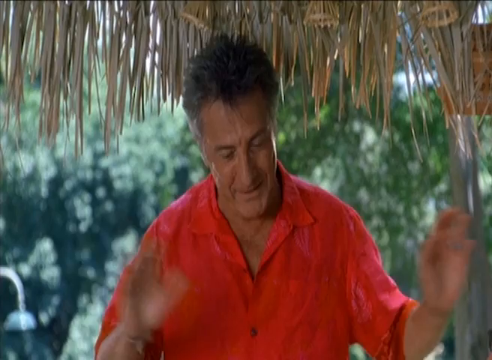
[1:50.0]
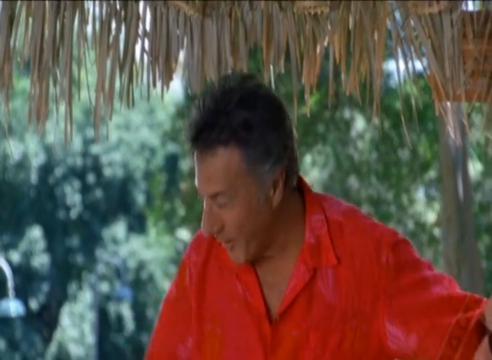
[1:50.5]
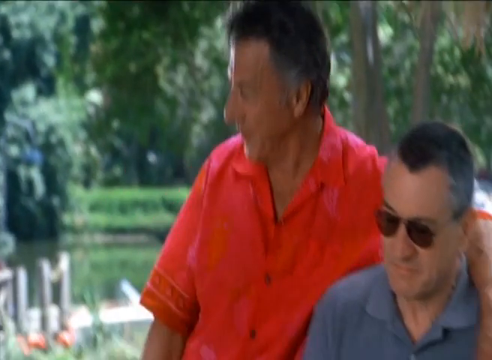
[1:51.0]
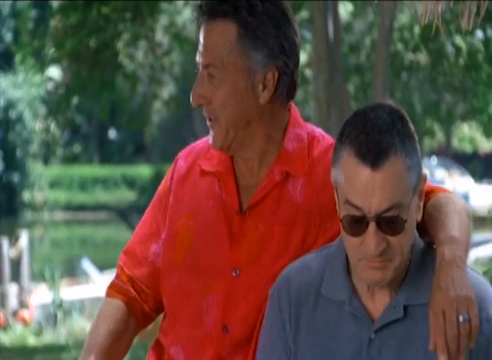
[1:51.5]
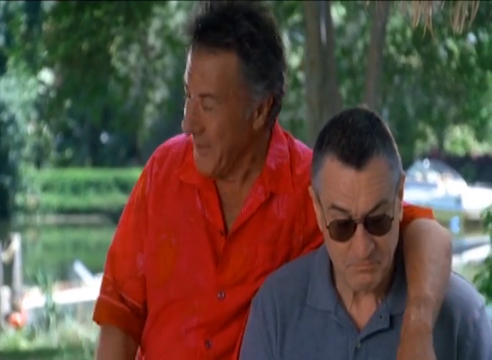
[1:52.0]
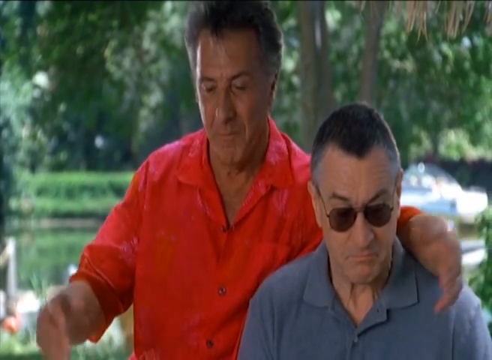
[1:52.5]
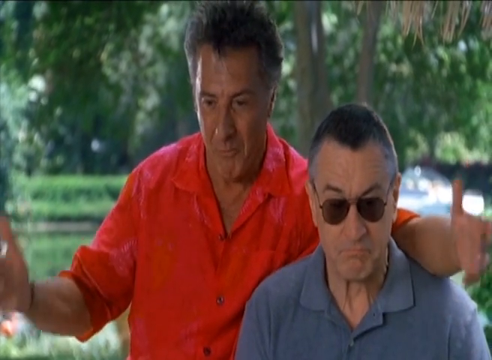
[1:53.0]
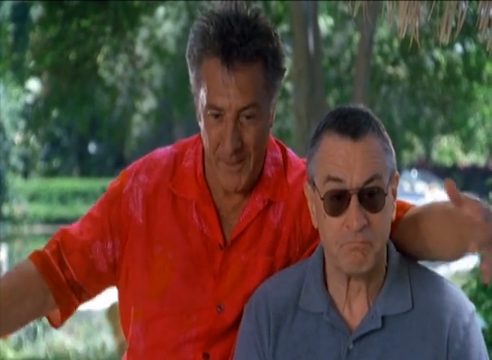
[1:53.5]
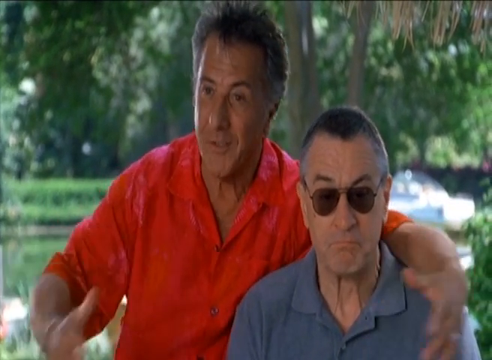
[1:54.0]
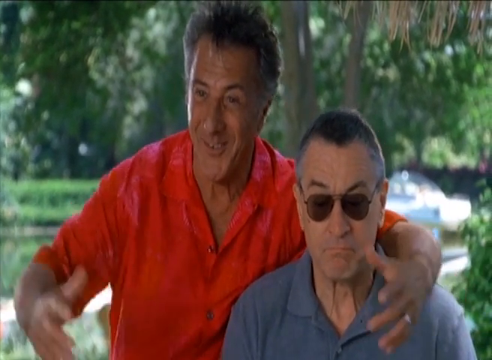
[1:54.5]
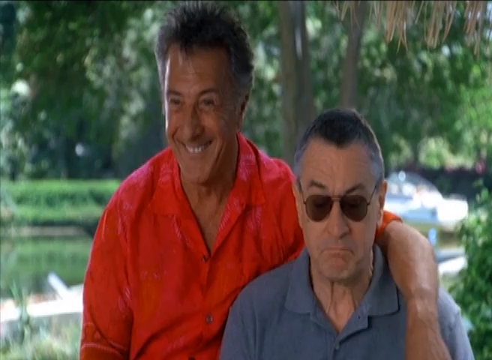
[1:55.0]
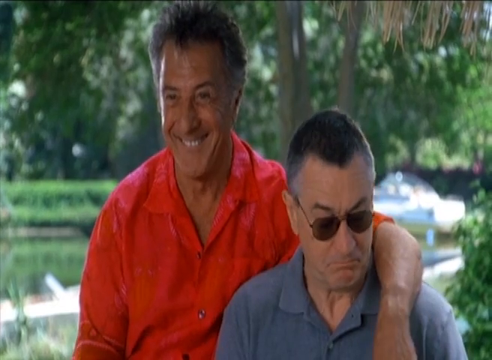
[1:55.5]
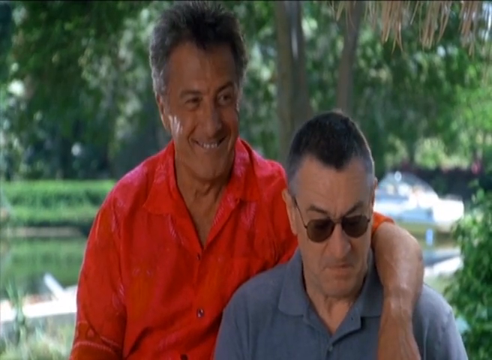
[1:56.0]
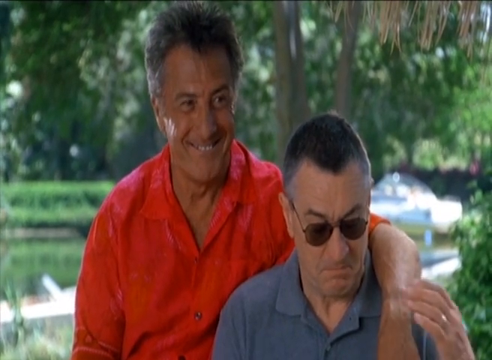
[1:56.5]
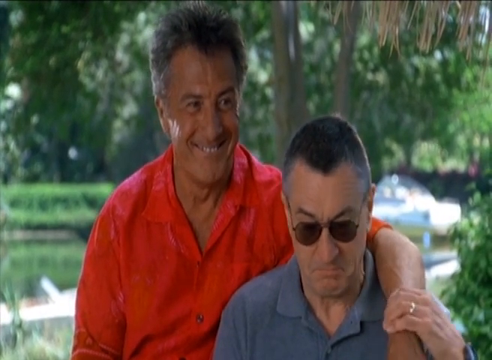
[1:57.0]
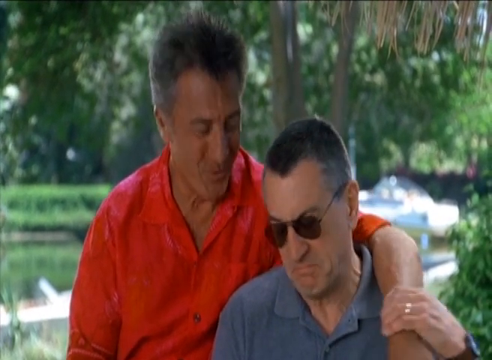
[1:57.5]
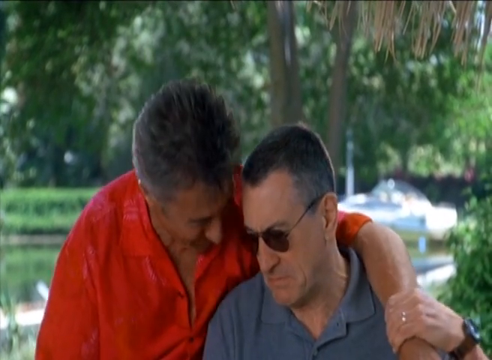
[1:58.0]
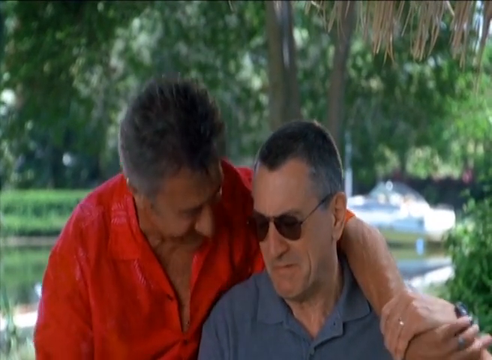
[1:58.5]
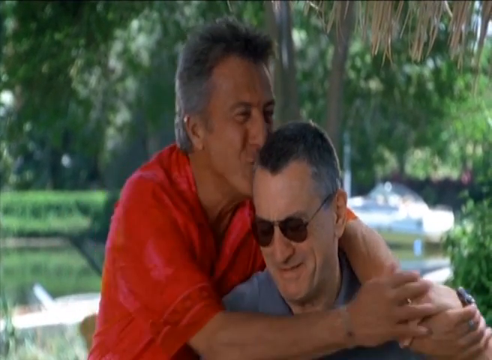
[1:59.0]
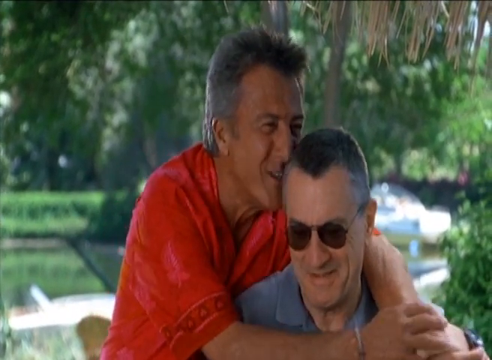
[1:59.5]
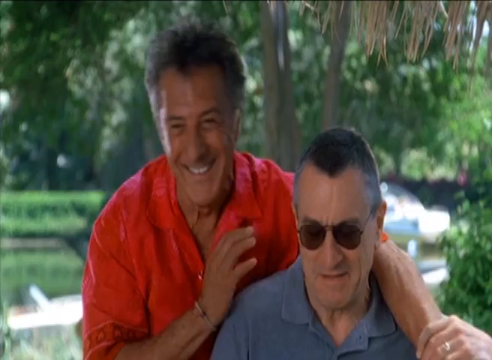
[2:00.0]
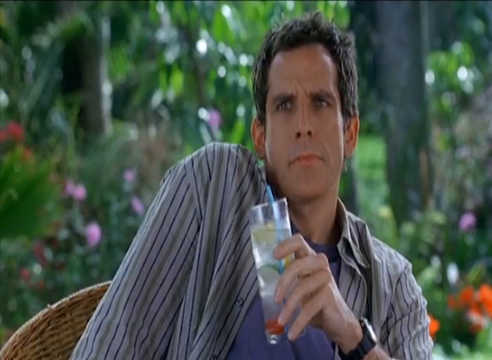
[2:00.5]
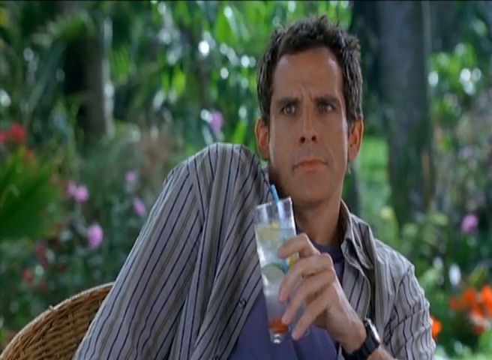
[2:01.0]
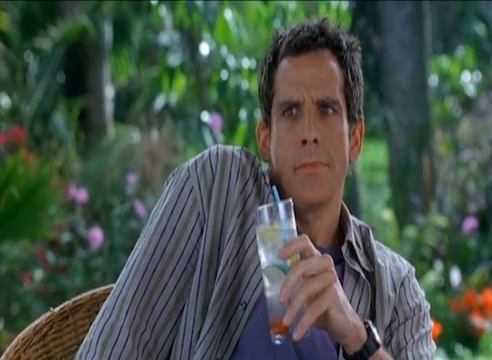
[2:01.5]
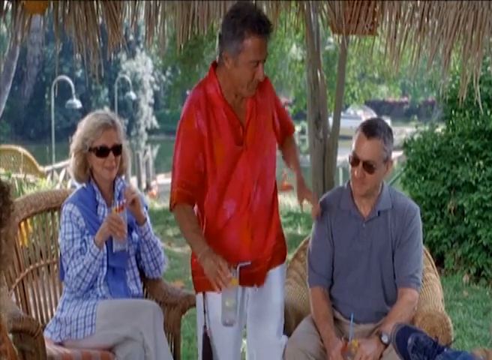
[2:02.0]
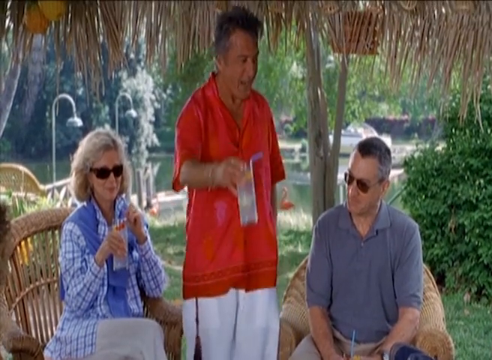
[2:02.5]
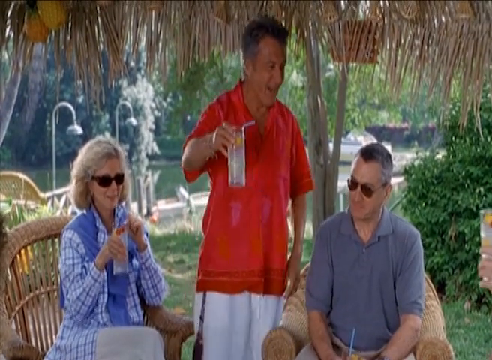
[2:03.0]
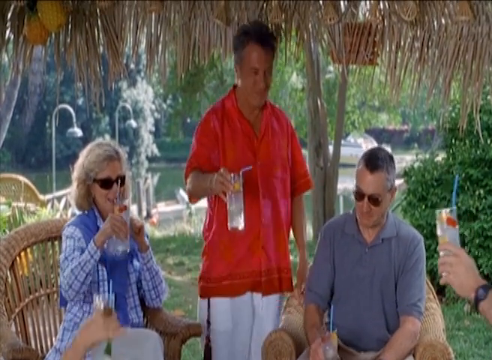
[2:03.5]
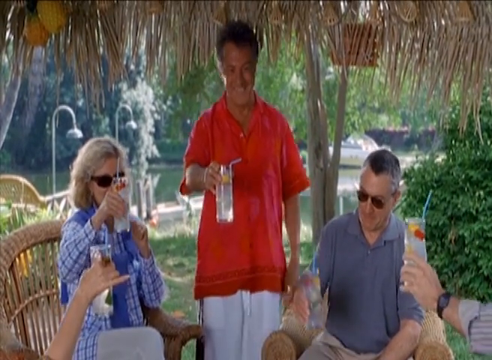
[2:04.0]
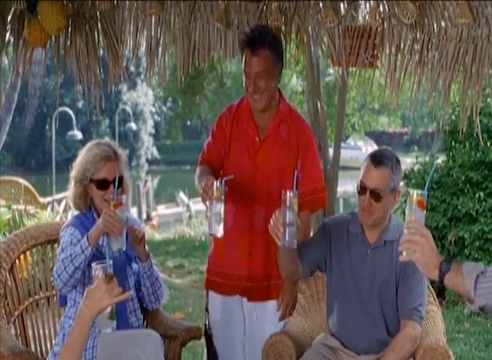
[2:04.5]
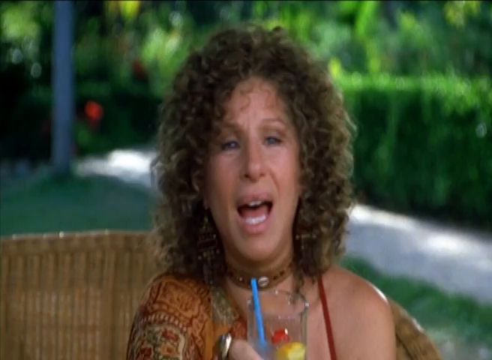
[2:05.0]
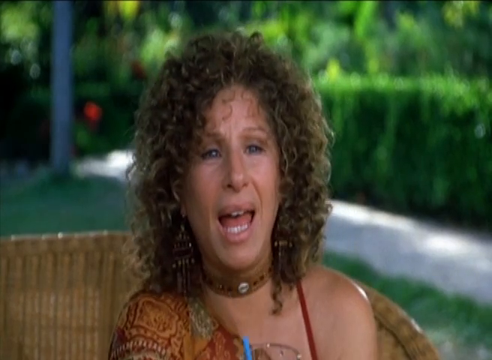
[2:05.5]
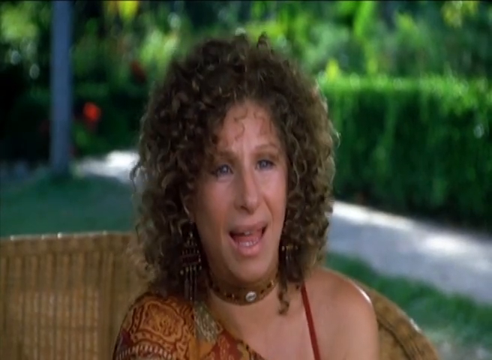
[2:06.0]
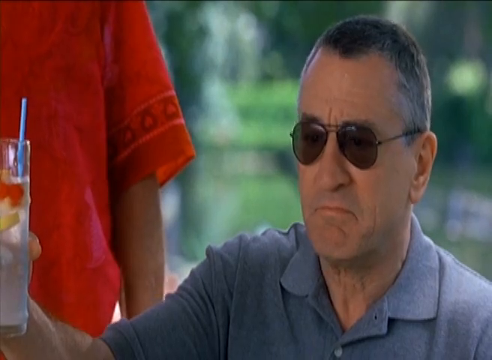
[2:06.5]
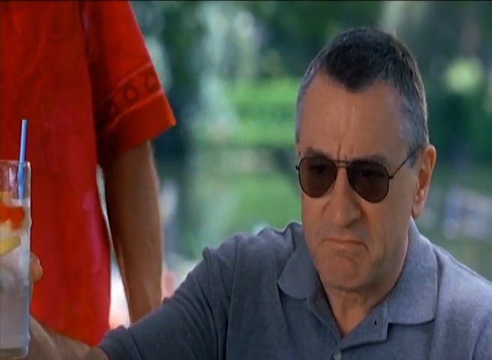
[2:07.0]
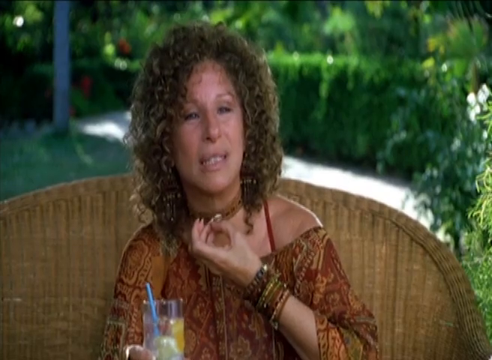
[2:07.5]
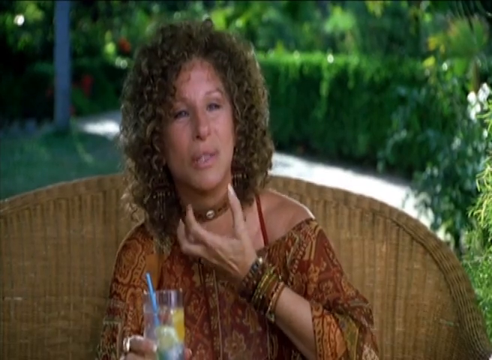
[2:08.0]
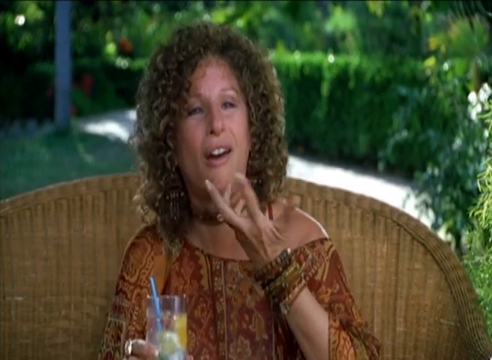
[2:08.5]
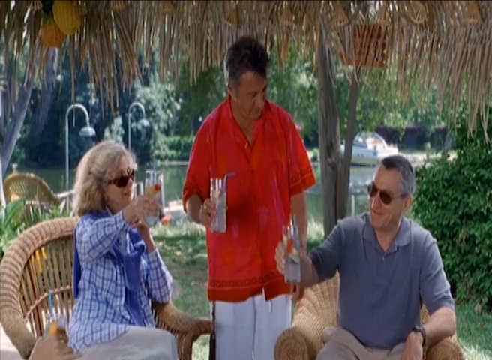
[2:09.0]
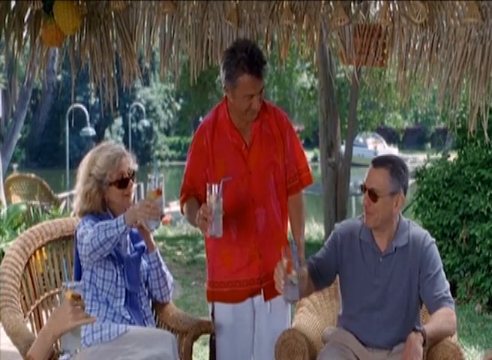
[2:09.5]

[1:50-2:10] The older man in the red shirt talks and smiles, then sits down on the armchair of the older man with dark glasses. He puts his left arm around the other man's shoulder and talks again, gesticulating with both hands, while the man in dark glasses has a sort of stressed look and looks glum. The man in dark glasses suddenly grabs the wrist of the man in red, who starts laughing, puts his right hand over to hug him, and kisses his head. Pulling away, he laughs and taps his shoulder. The young man leans back in his chair with a glass of drink in front of him, looking smug. The man in red gets back up, standing between the older lady with glasses and the older gentleman with glasses, and raises his glass, seeming to offer a toast; everyone else raises their glasses as well. The older lady with the curls seems to be speaking and raises her glass. The older gentleman with glasses, still looking smug, raises his glass. The older lady with curls talks, her left hand gesturing in front of her neck and mouth. The man in red, between the older lady with glasses and the older man with glasses, does cheers with them.